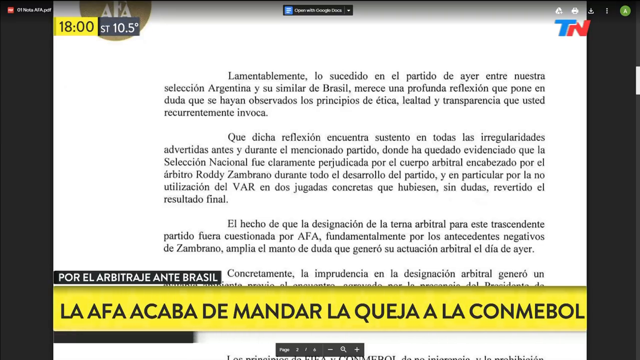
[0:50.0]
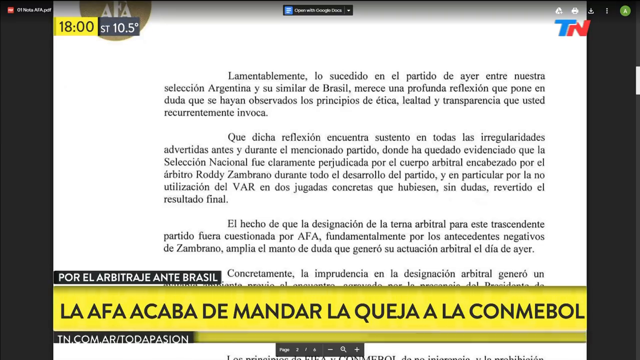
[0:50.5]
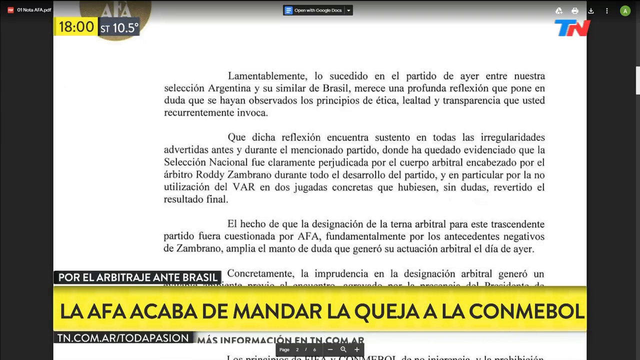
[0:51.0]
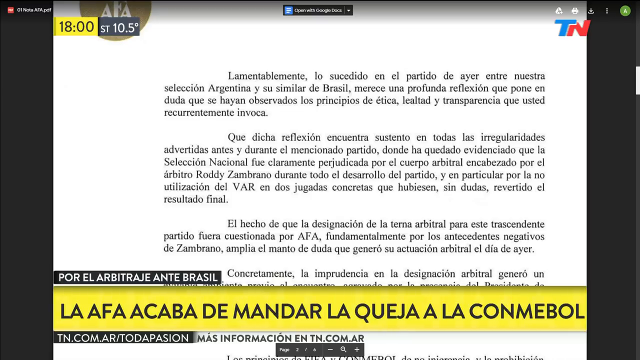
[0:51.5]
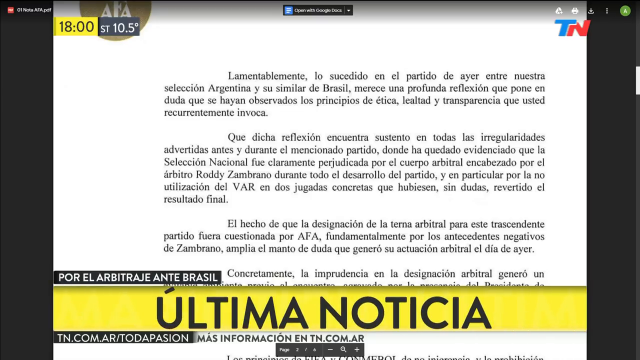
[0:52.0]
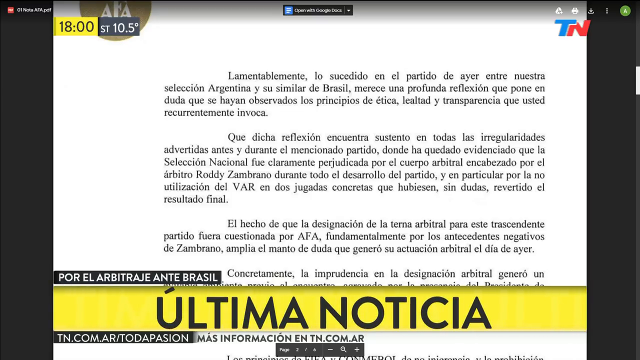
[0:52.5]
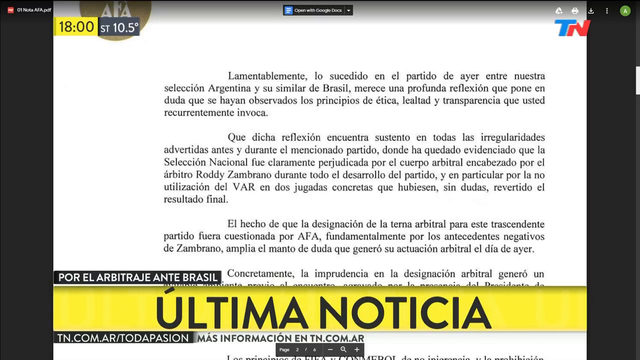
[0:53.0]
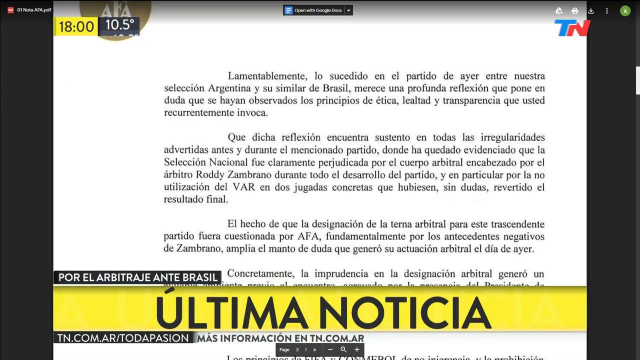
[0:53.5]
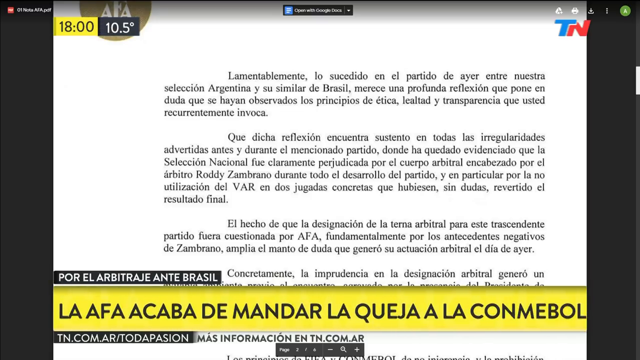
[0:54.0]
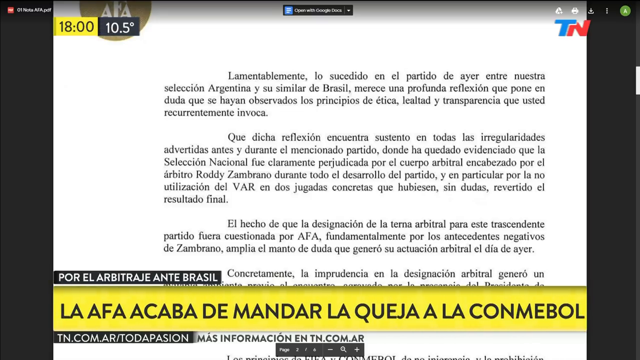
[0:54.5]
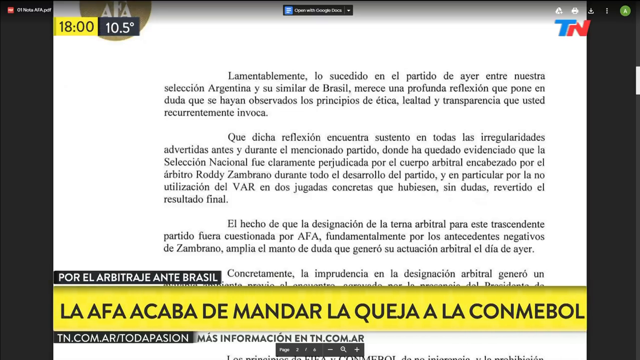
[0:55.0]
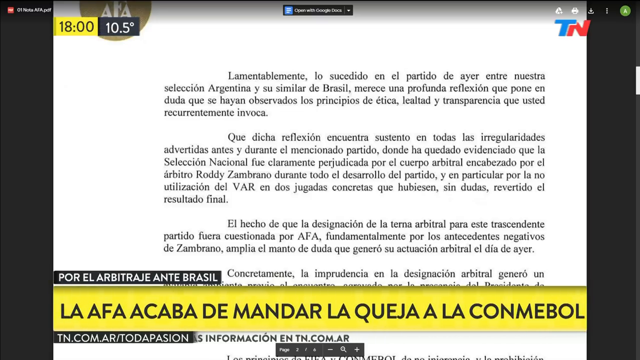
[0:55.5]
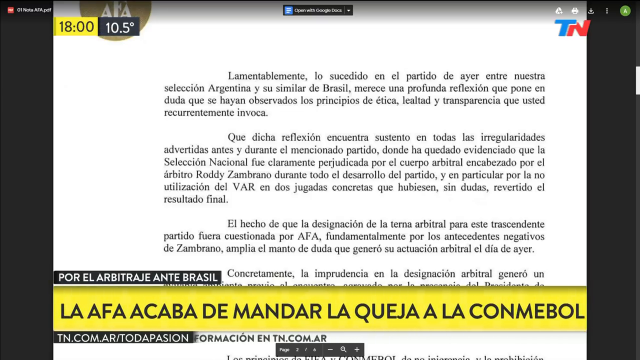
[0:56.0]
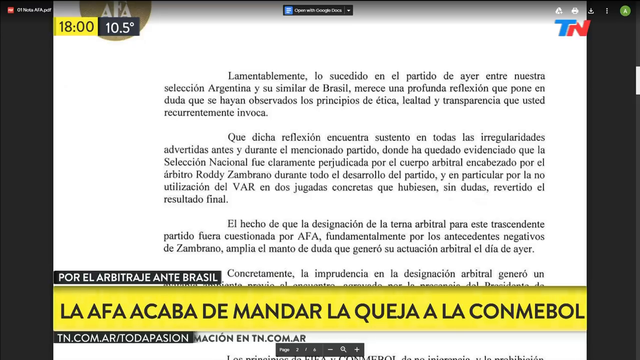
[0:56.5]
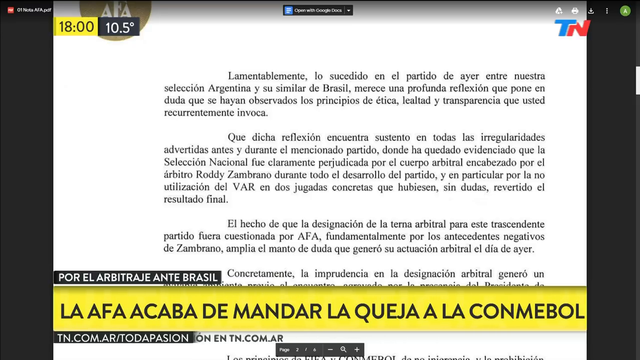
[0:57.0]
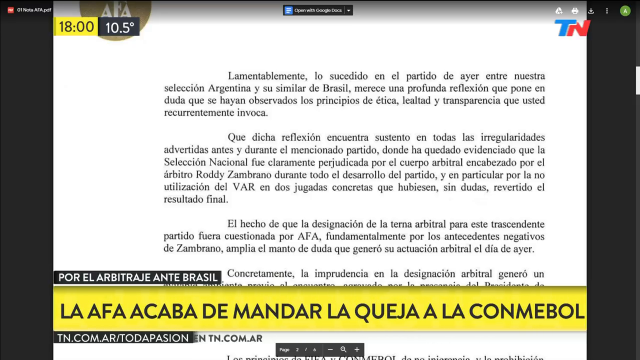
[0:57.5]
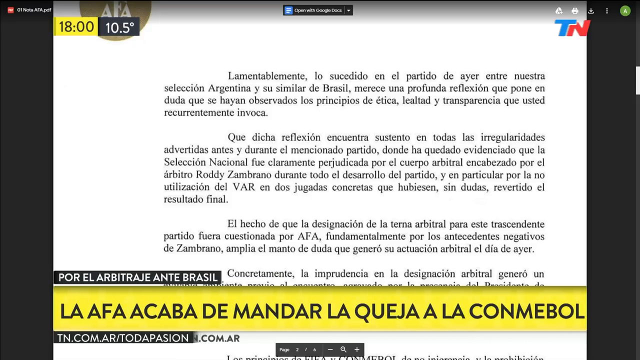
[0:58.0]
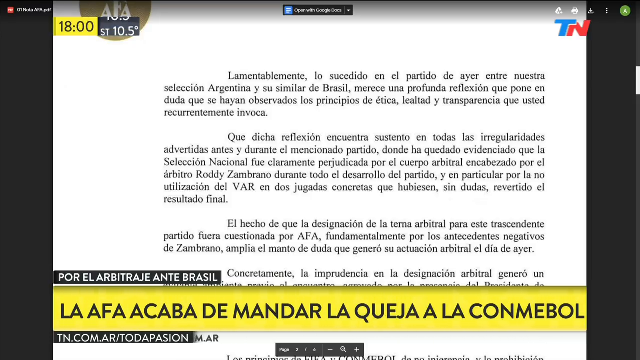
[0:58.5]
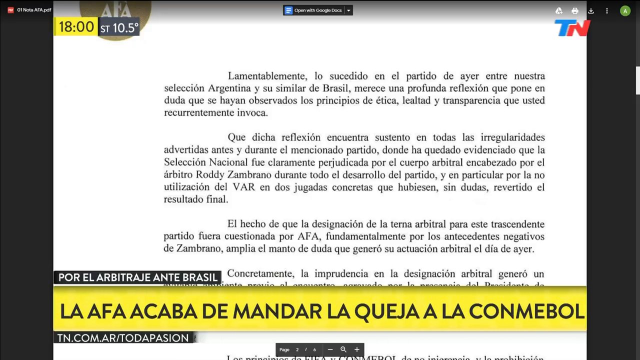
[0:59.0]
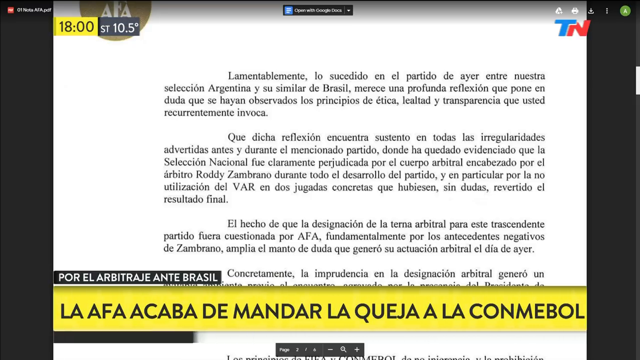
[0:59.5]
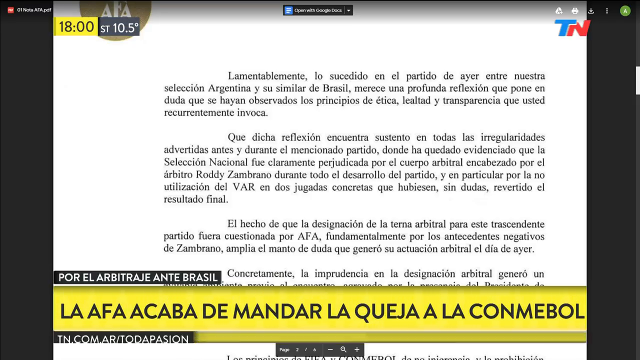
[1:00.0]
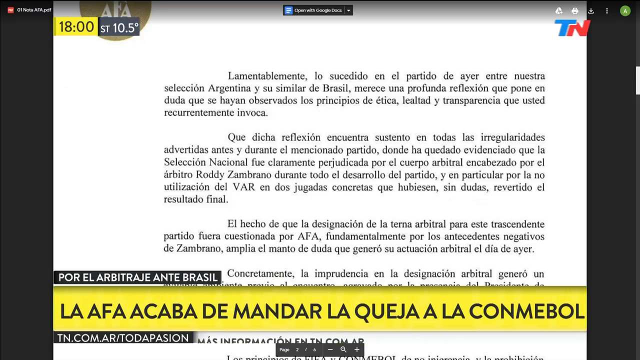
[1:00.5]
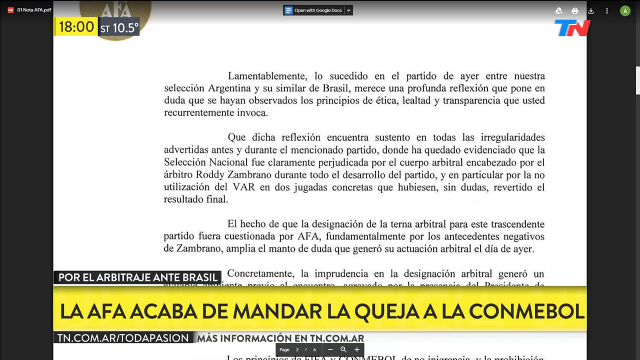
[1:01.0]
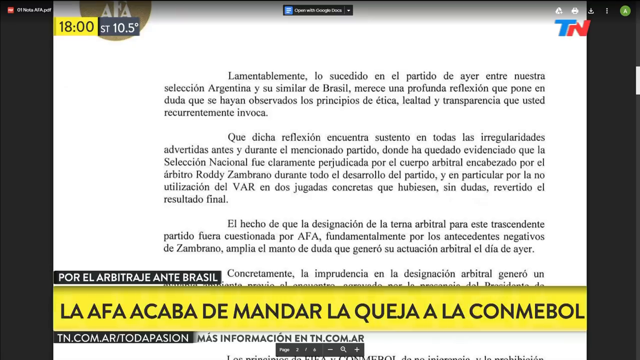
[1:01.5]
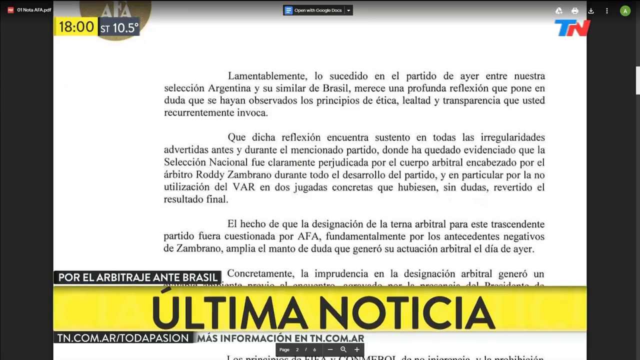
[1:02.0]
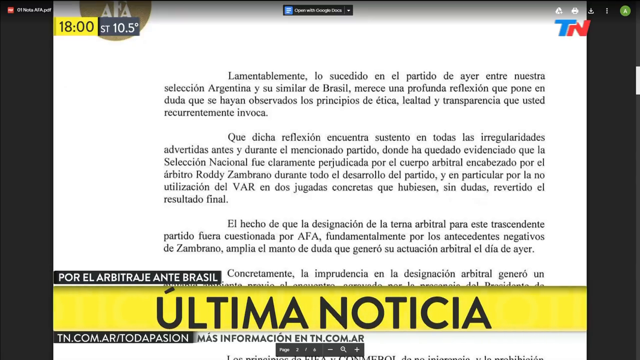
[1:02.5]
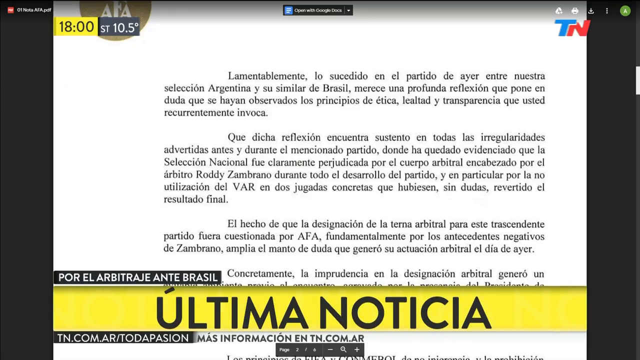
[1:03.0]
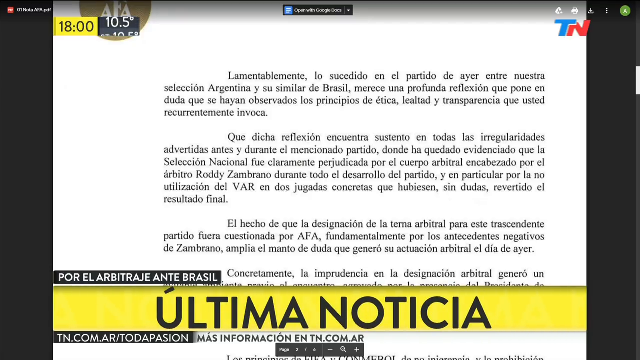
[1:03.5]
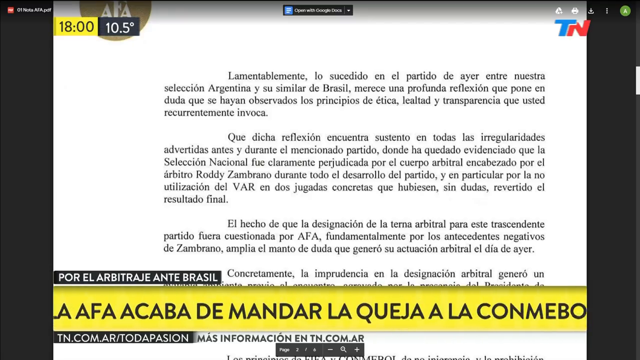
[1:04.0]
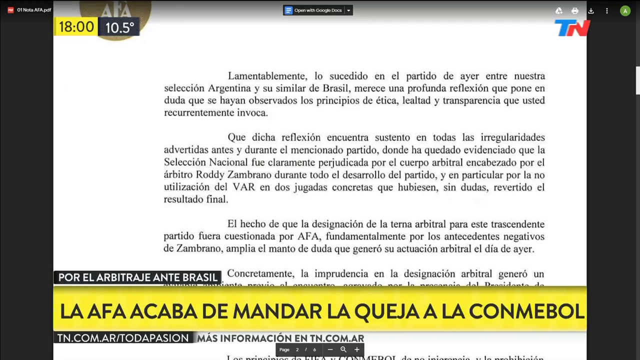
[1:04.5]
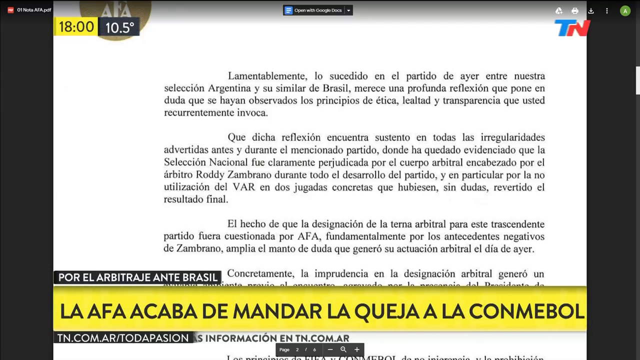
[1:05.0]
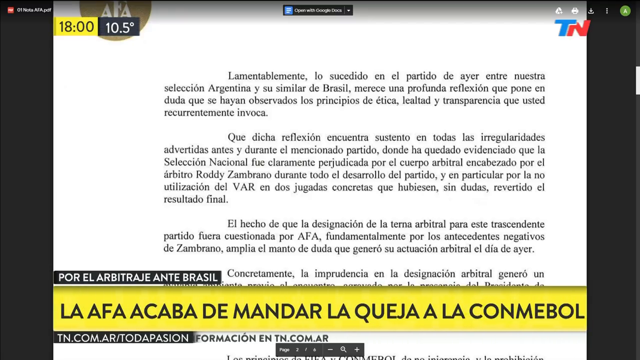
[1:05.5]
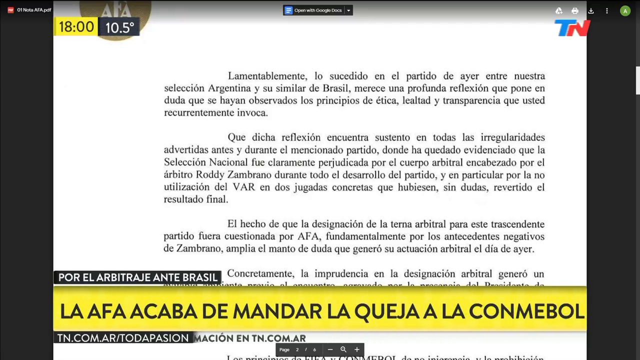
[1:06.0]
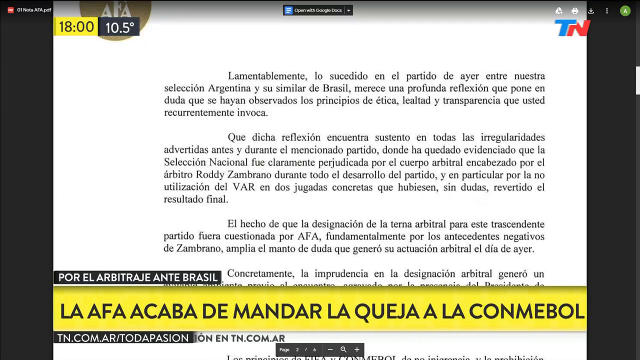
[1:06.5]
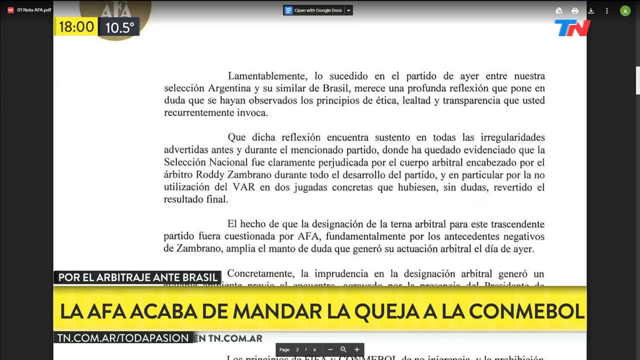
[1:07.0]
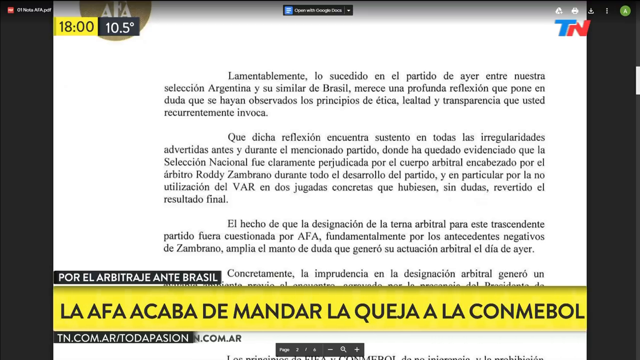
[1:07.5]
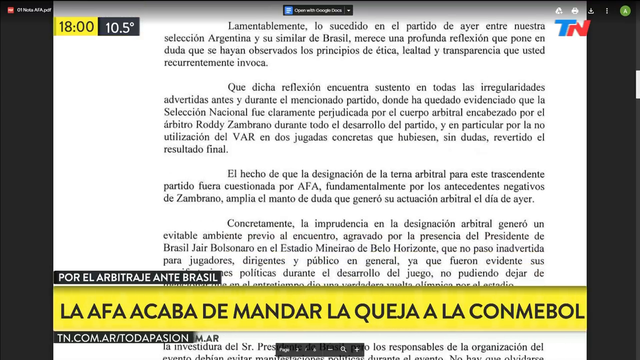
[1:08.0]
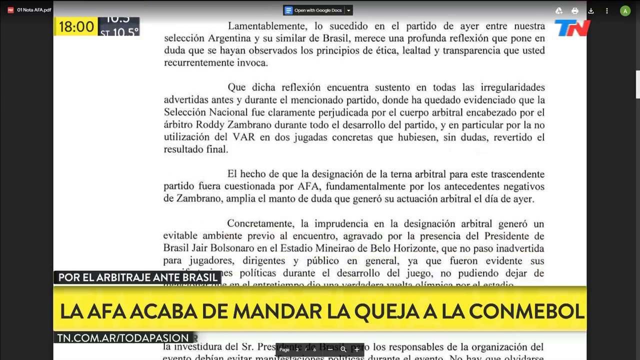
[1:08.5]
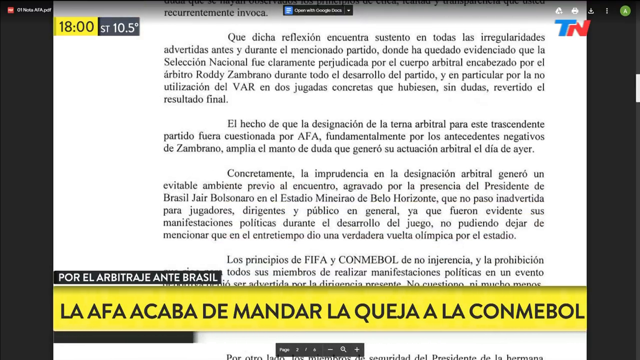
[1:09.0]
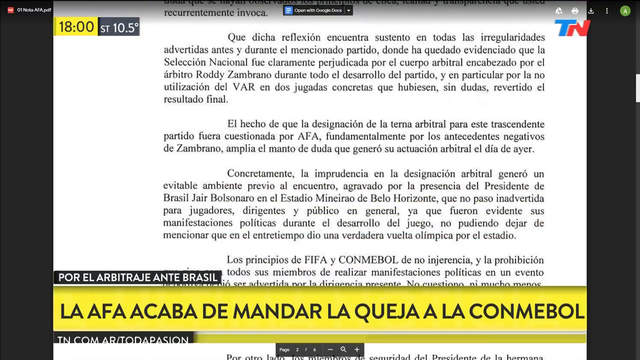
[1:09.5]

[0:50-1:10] The same text continues, with the words "Ultima Noticia" in a small gold bar at the bottom of the screen. The language is entirely Portuguese, and someone appears to be looking at a site from Brazil. The time shown is 1800 hours. A letterhead at the top says "AFA," which possibly has something to do with soccer. All of the paragraphs are written in Portuguese.